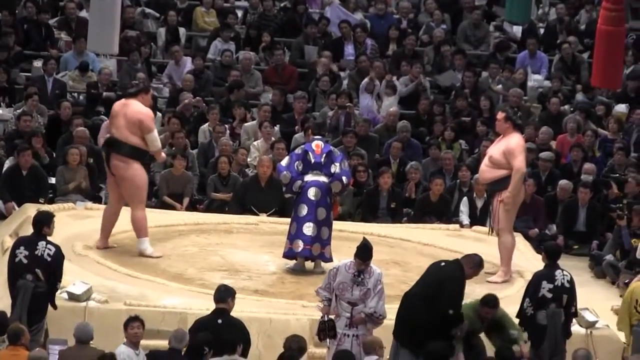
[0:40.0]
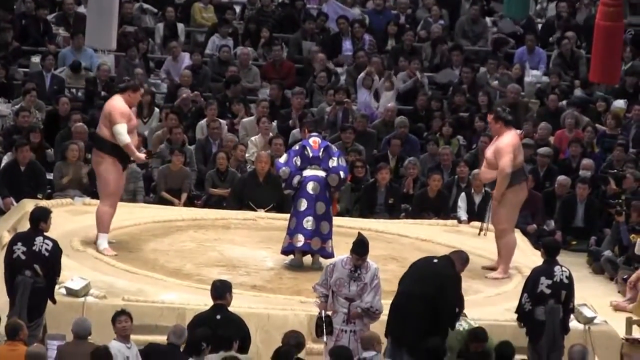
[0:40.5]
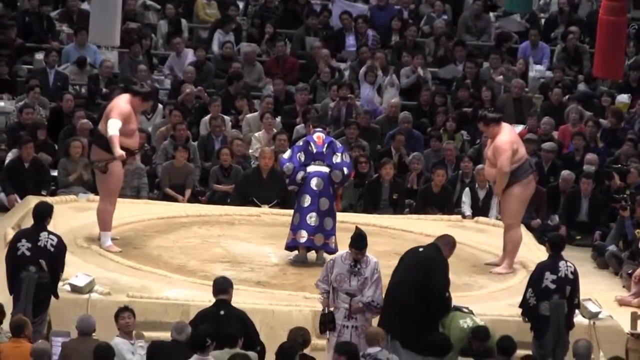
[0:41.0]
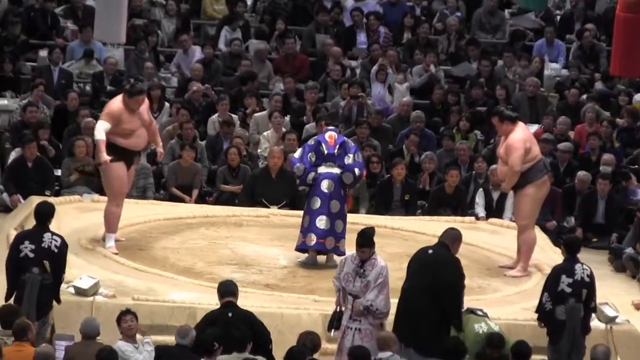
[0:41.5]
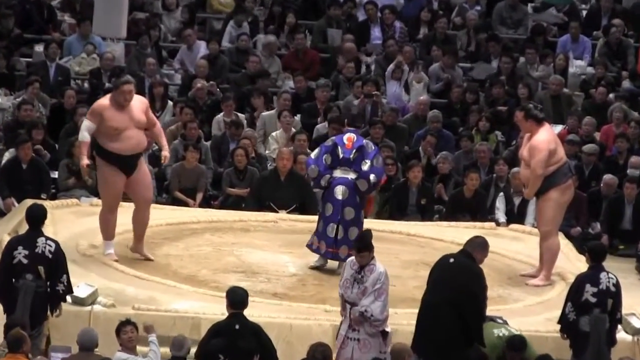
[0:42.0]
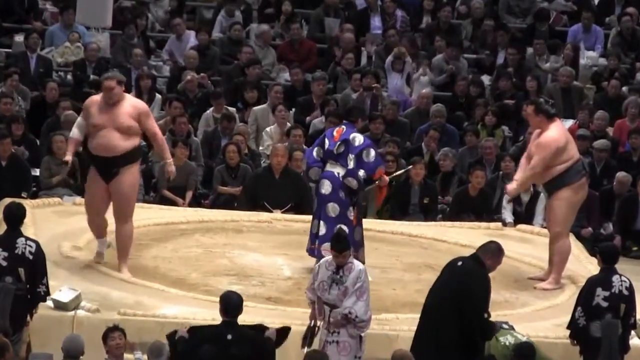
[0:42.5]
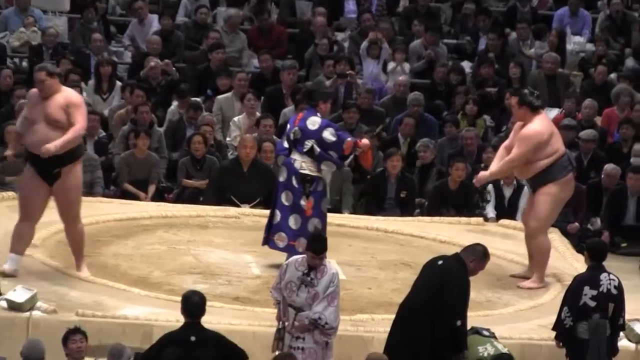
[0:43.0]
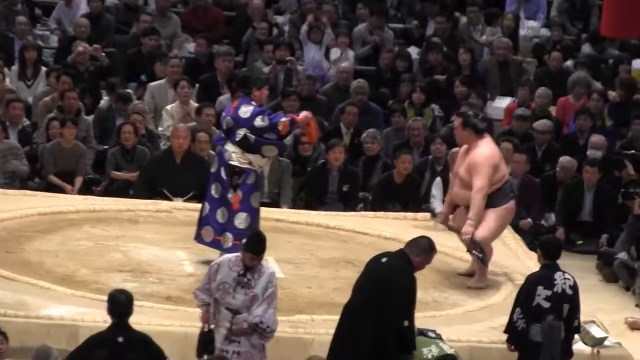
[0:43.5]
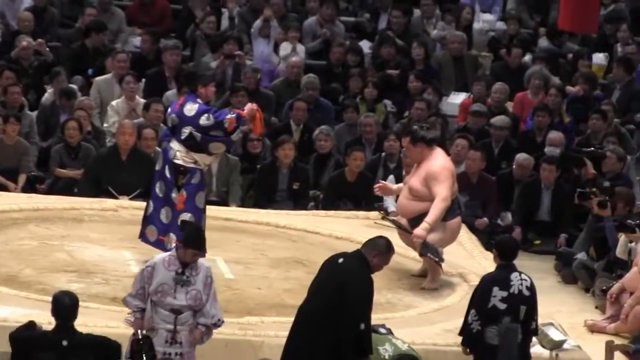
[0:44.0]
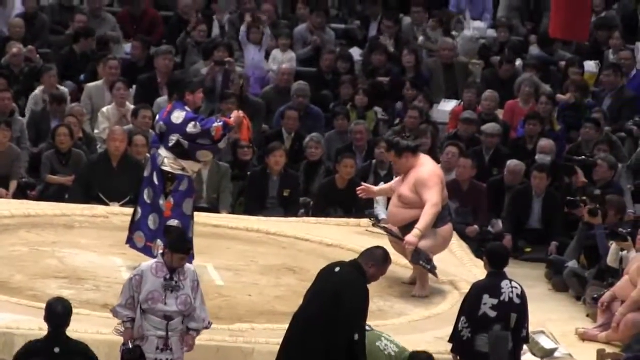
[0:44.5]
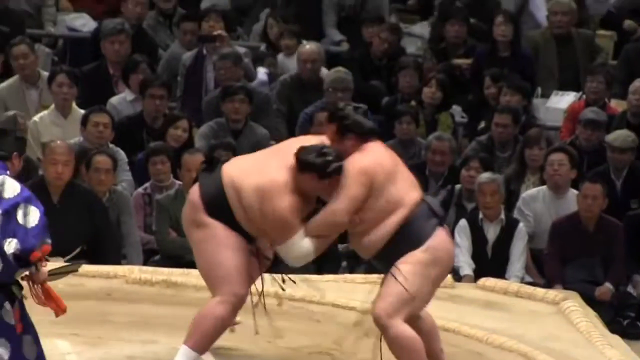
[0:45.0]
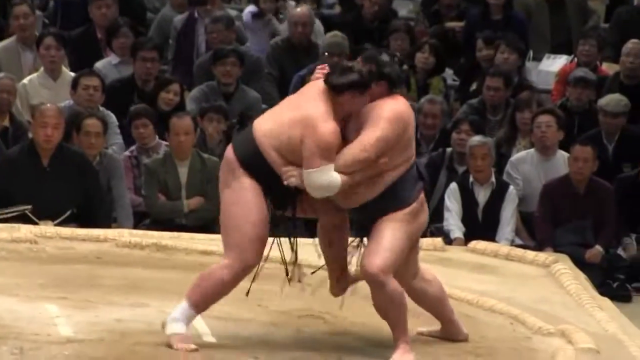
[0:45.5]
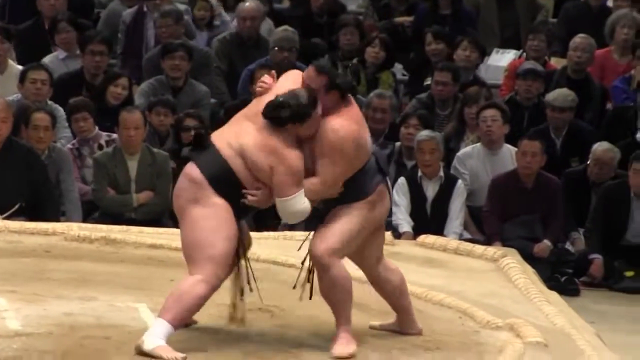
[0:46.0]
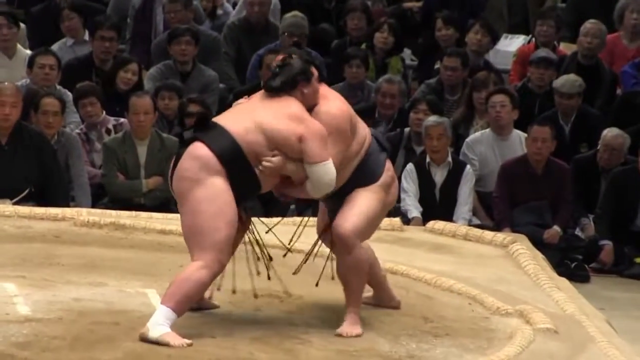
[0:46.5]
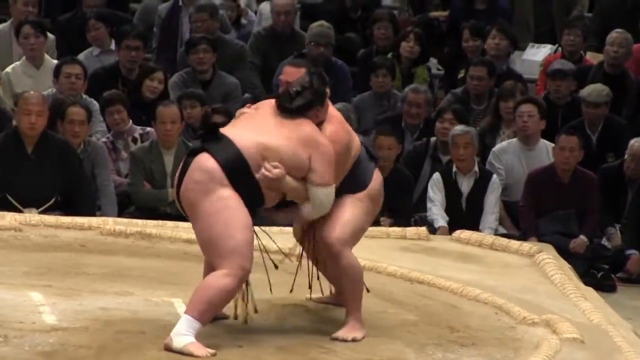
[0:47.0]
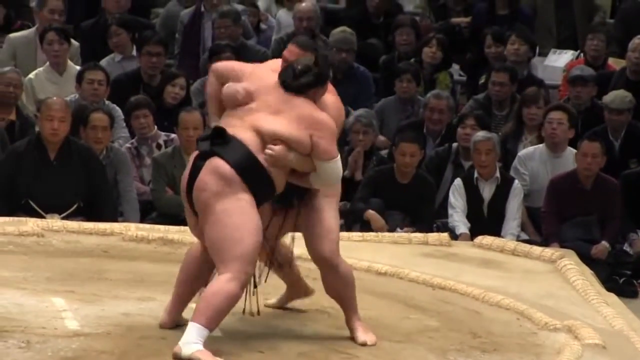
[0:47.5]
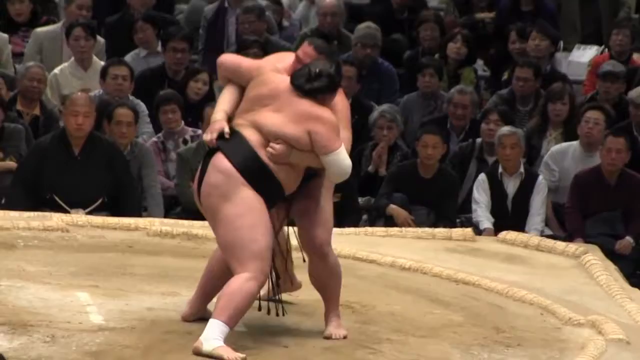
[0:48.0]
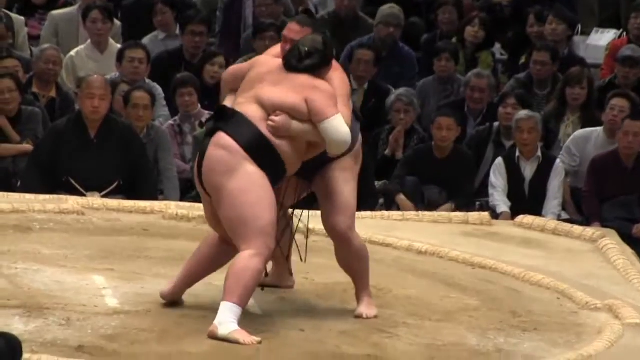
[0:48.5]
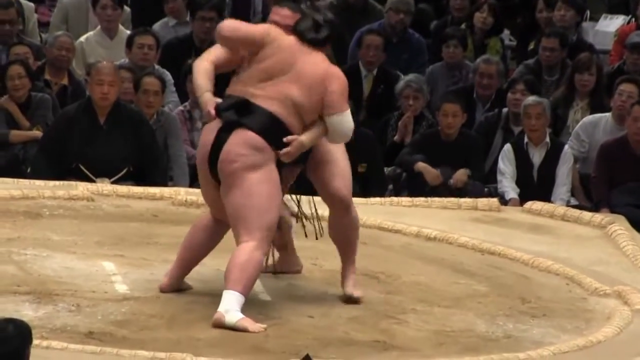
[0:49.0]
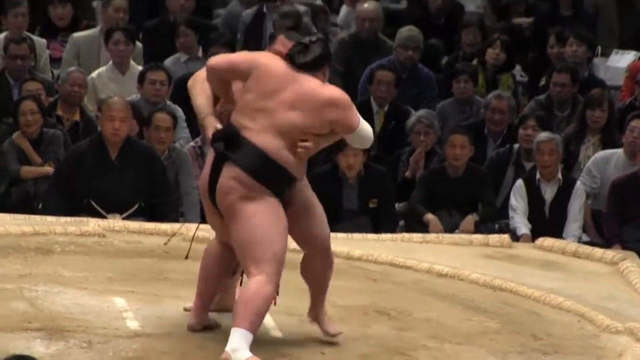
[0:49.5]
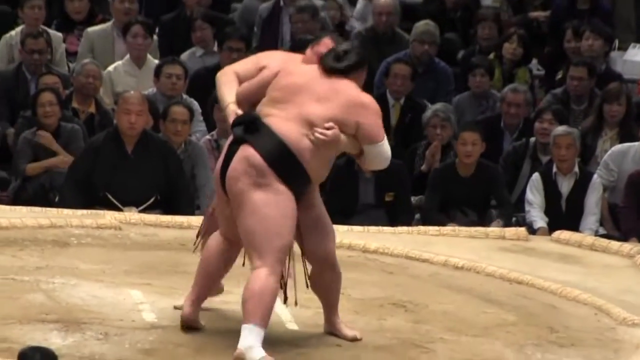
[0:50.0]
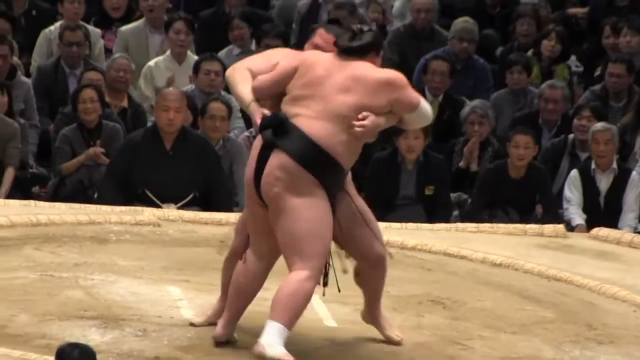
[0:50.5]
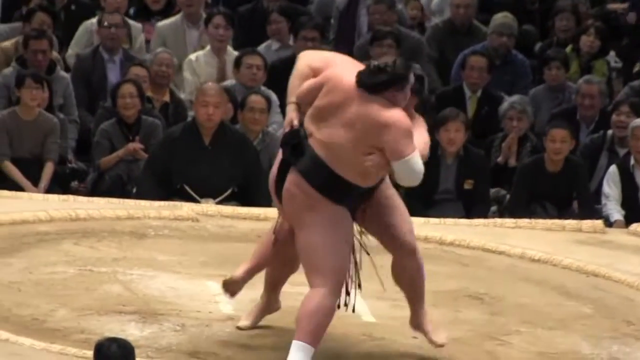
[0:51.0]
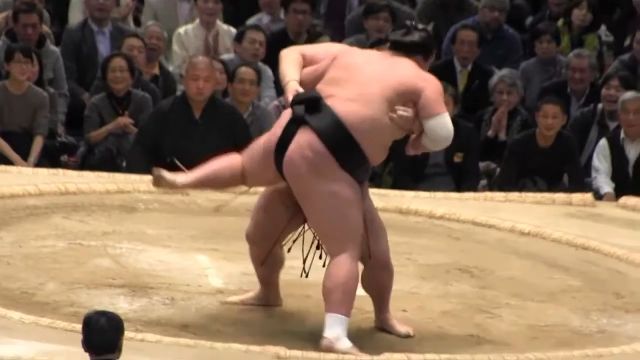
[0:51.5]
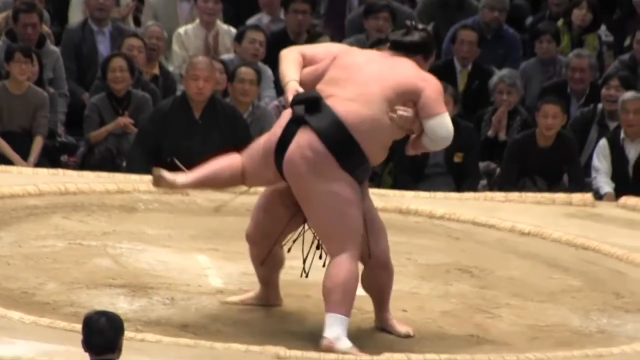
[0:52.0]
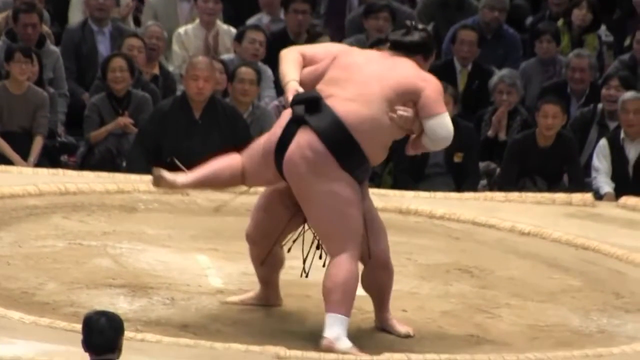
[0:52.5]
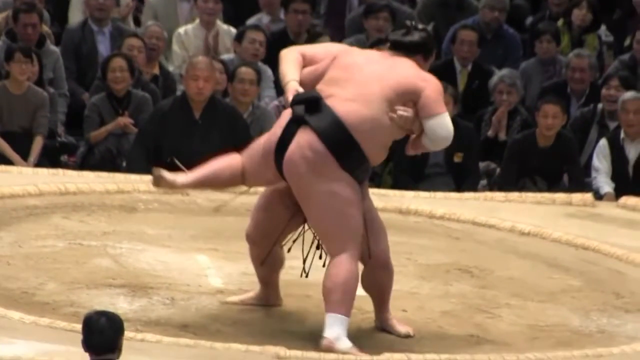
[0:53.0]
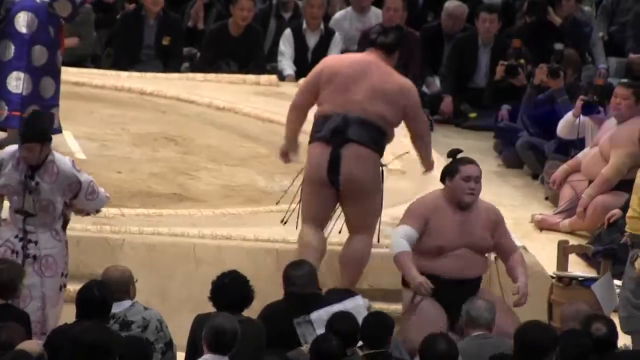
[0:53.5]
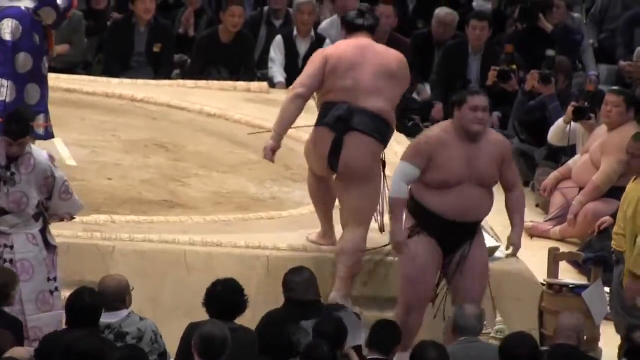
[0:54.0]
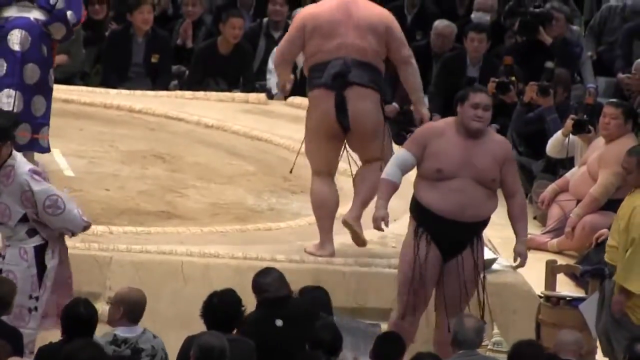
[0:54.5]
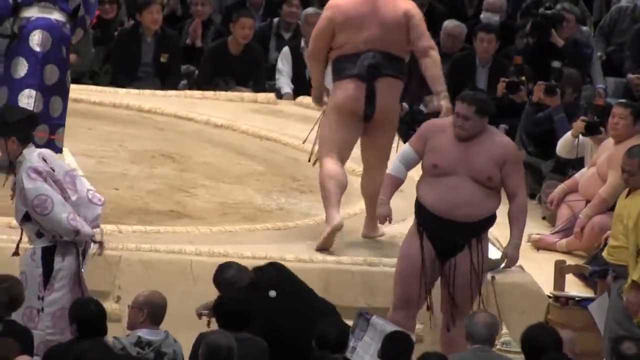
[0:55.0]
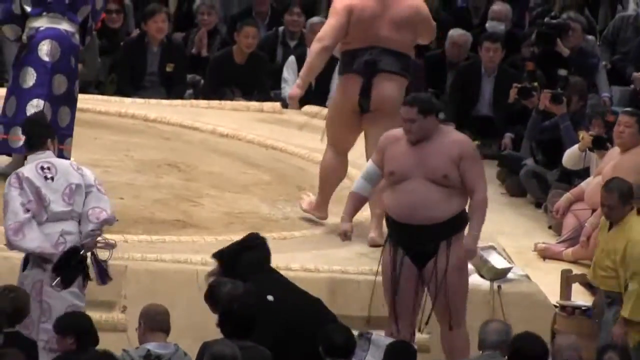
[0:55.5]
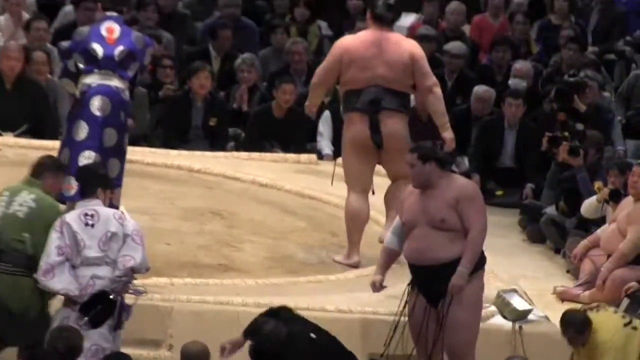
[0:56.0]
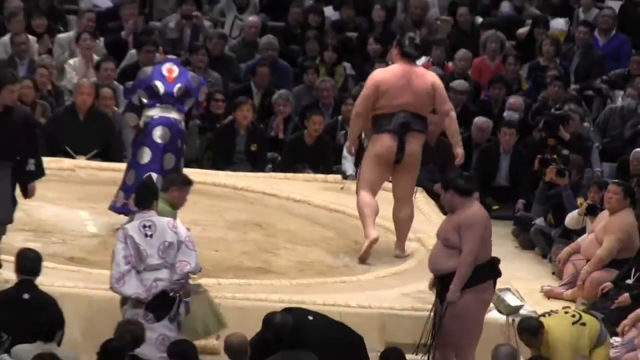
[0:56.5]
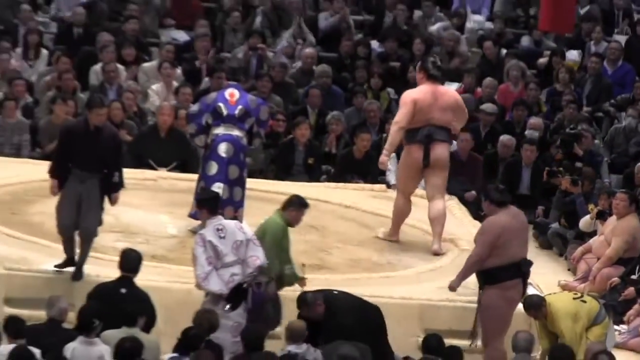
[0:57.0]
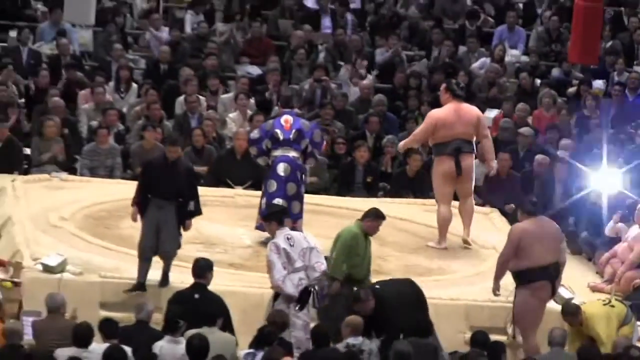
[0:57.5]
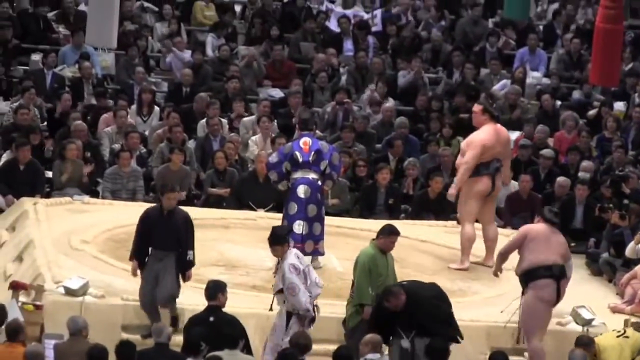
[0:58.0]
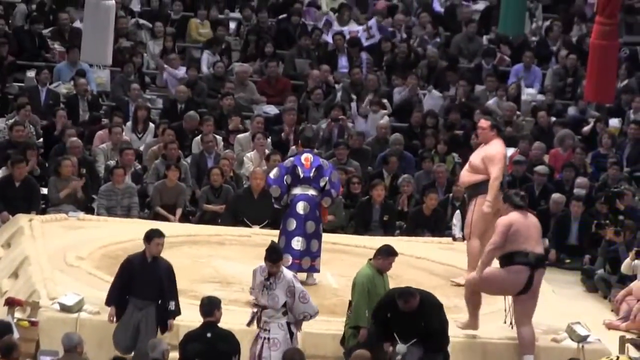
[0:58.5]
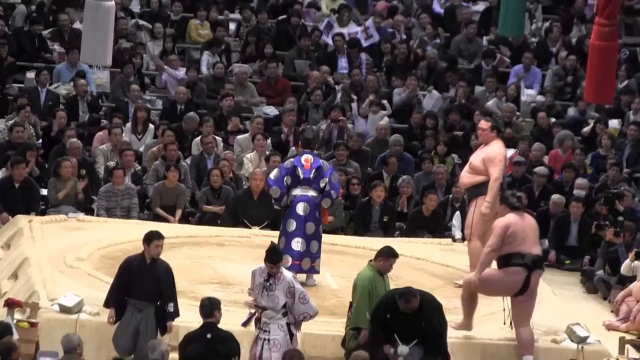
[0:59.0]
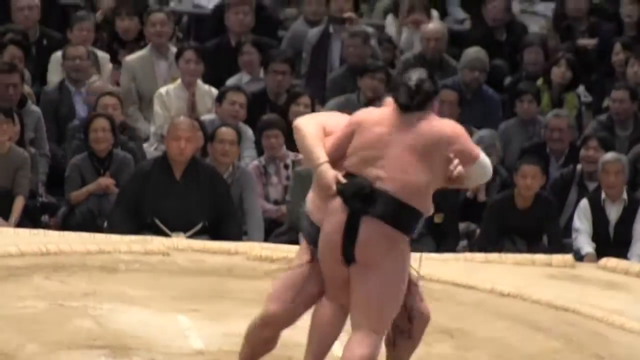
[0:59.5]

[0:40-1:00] Two similar wrestlers have been fighting in a competition. Both wear very thick black belts around their waists that look very sturdy and exactly the same. One looks a little chubbier than the other; the one on the right looks like he weighs a little more. The wrestler on the left has a wrap around his elbow and a wrap around his right ankle. Both have their hair back in man buns. Several people in the audience watch; some cheer and seem to really enjoy the sport, while others stand with their arms crossed. One woman with gray hair holds her hands up in a prayer shape. The wrestlers stand on a lot of dirt.